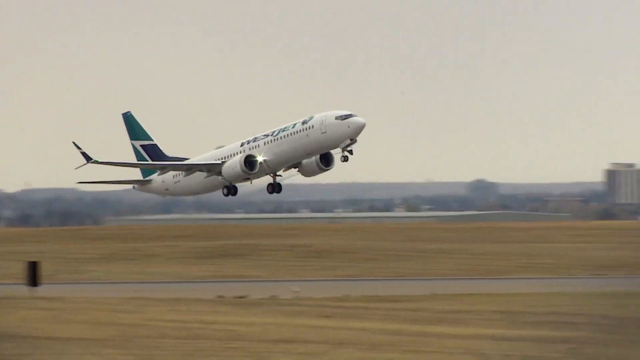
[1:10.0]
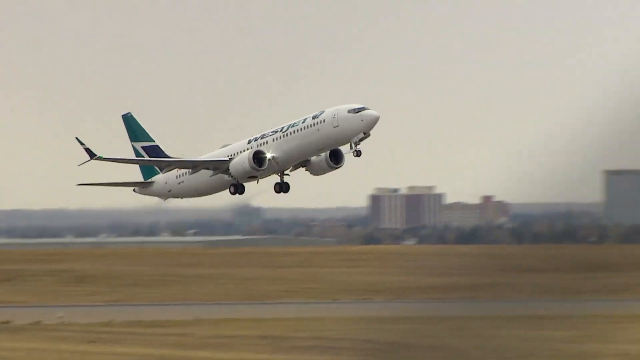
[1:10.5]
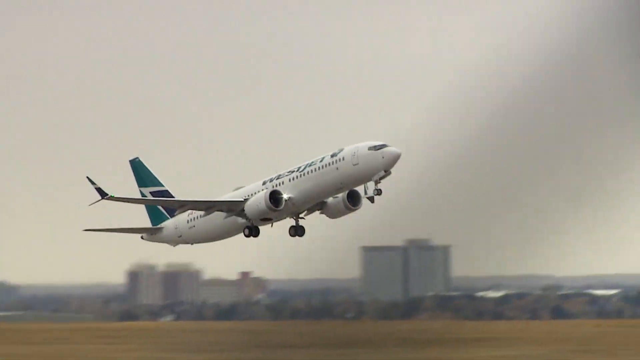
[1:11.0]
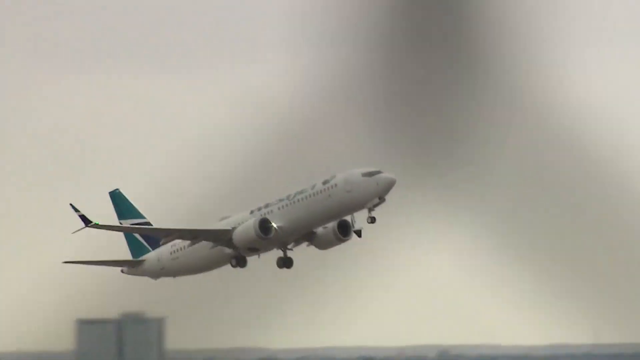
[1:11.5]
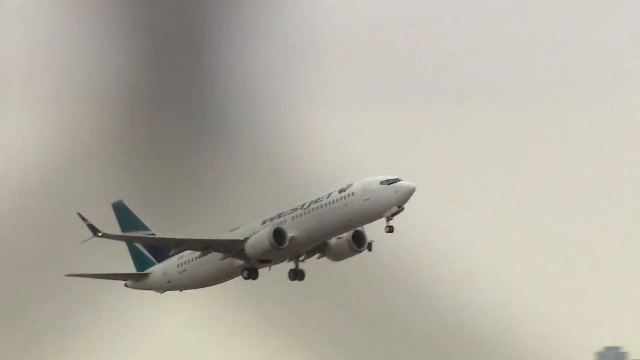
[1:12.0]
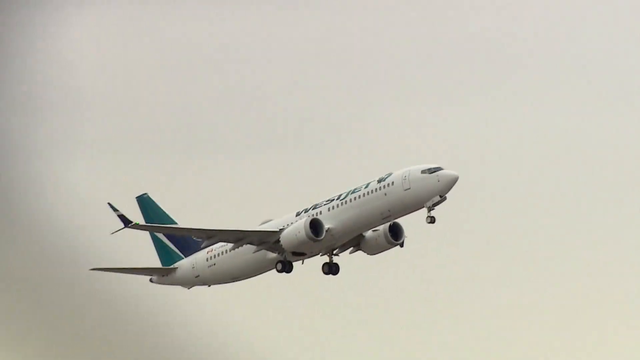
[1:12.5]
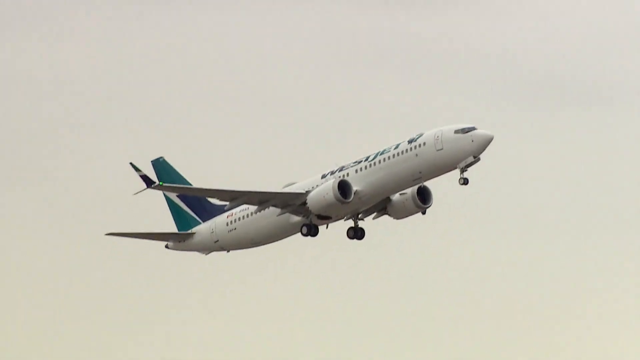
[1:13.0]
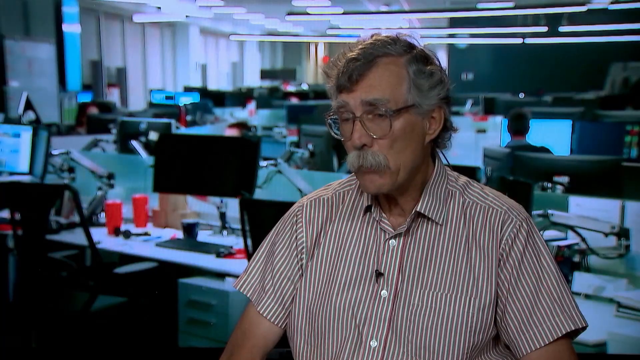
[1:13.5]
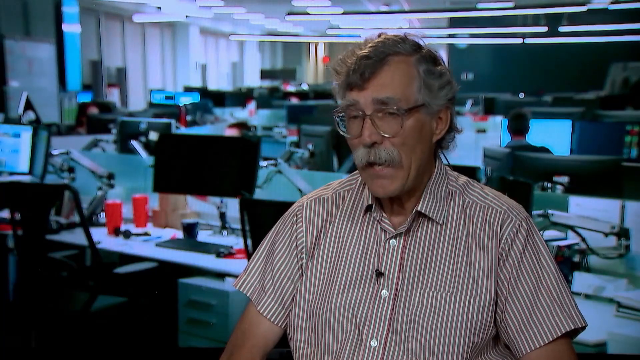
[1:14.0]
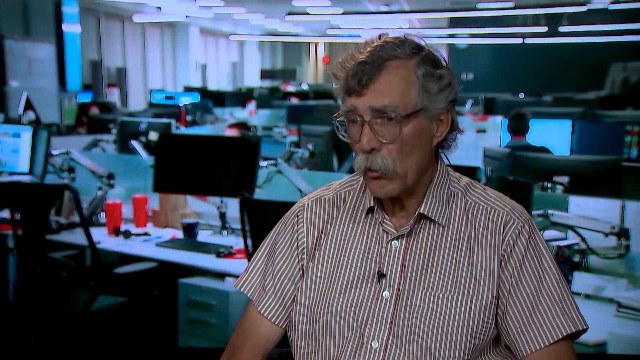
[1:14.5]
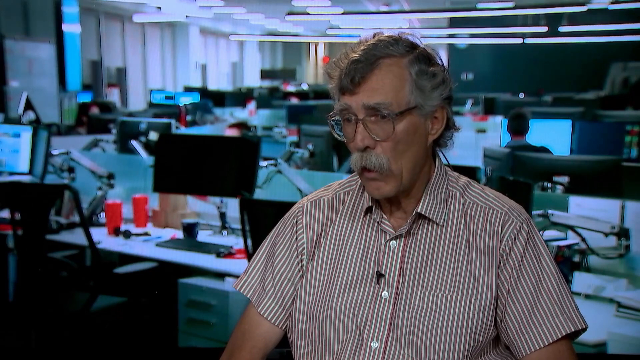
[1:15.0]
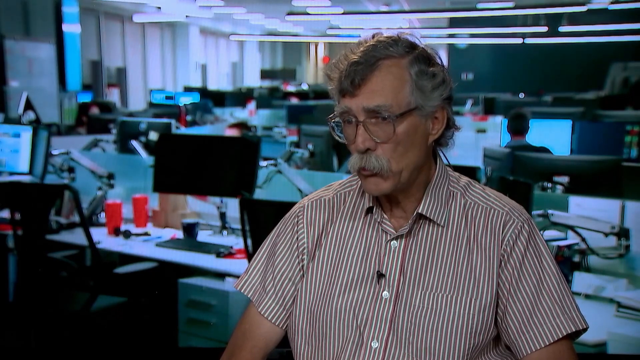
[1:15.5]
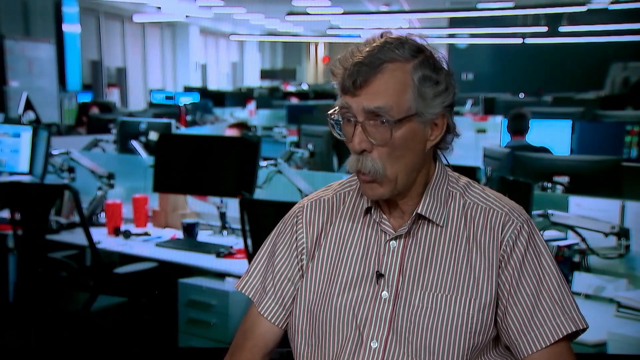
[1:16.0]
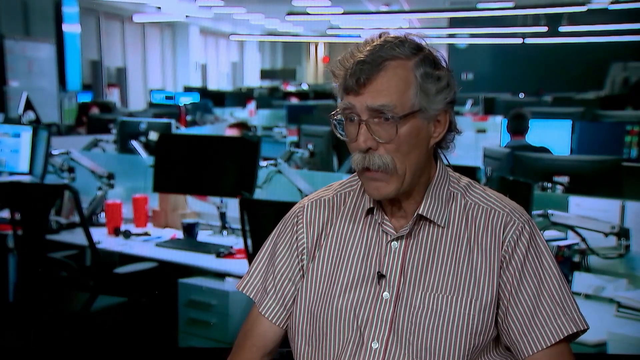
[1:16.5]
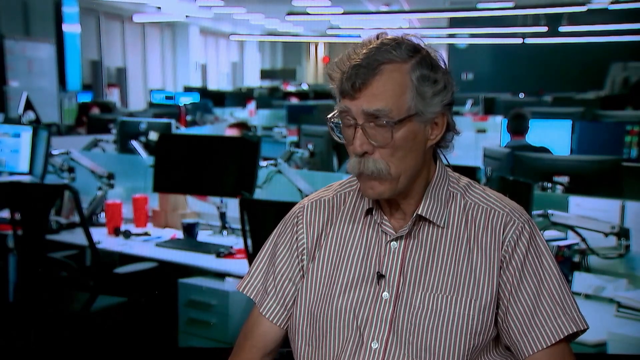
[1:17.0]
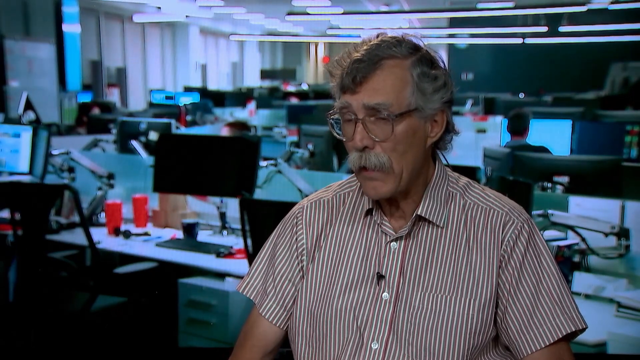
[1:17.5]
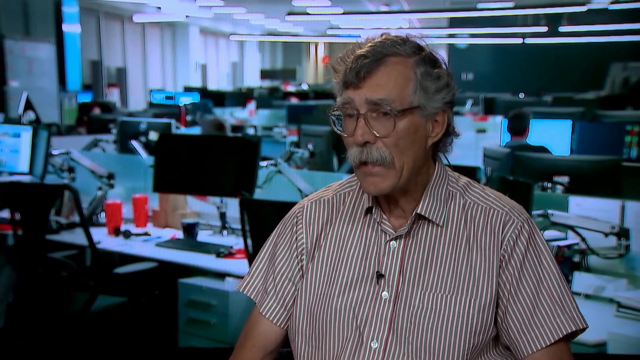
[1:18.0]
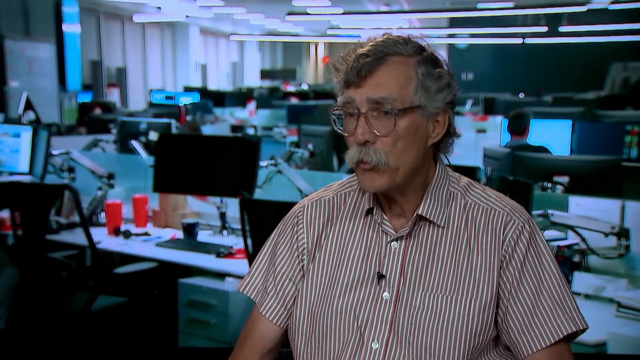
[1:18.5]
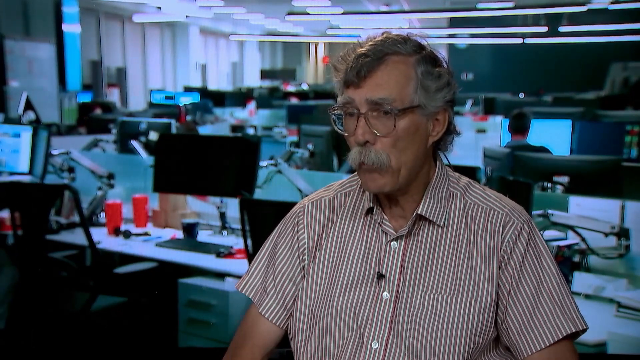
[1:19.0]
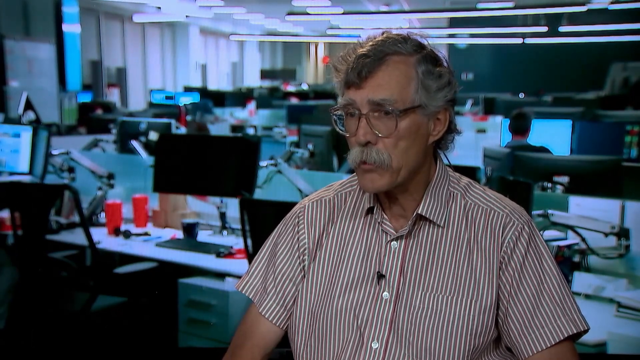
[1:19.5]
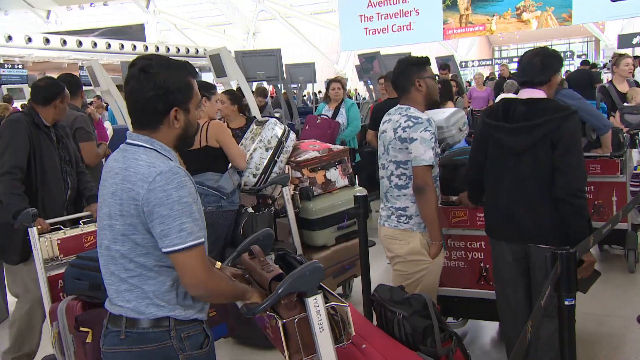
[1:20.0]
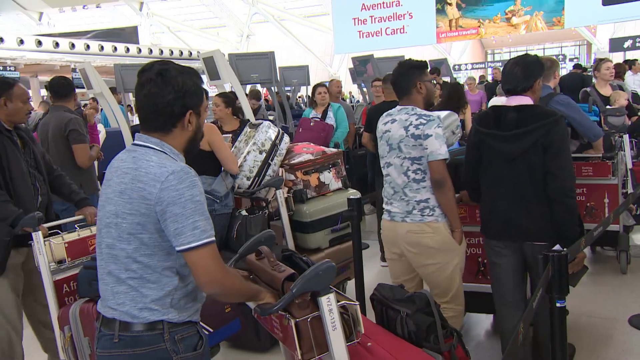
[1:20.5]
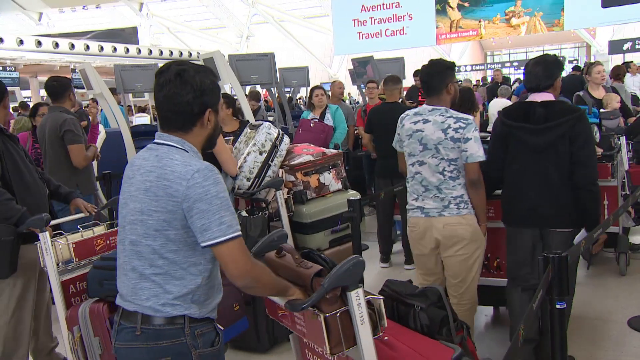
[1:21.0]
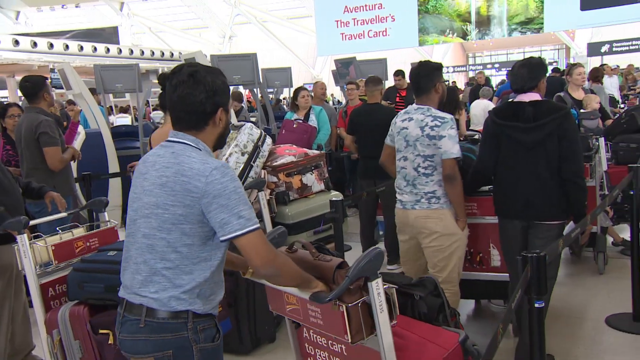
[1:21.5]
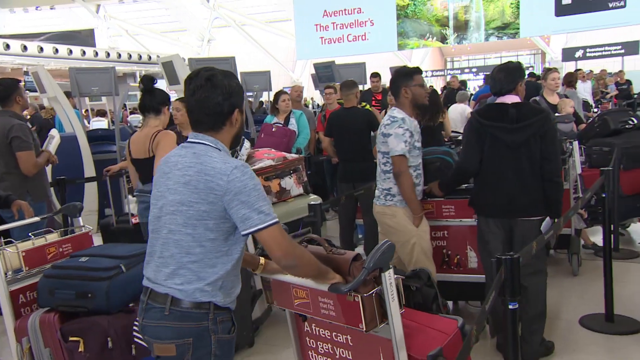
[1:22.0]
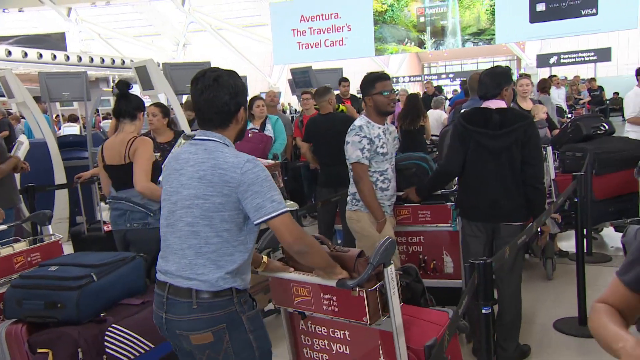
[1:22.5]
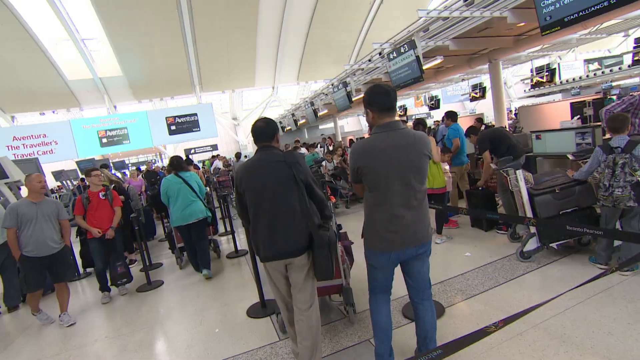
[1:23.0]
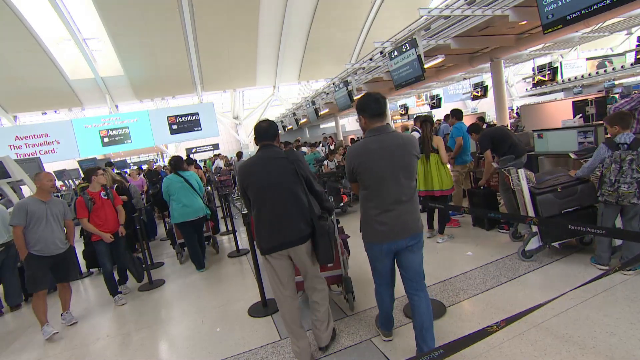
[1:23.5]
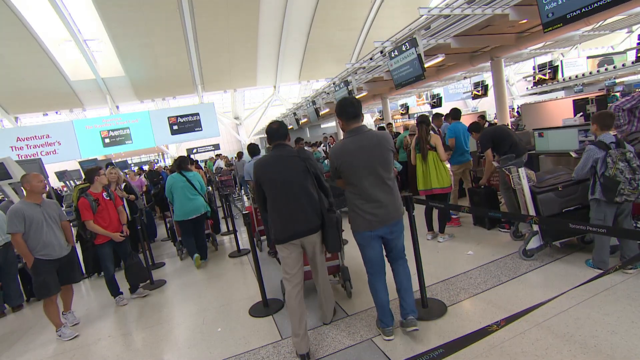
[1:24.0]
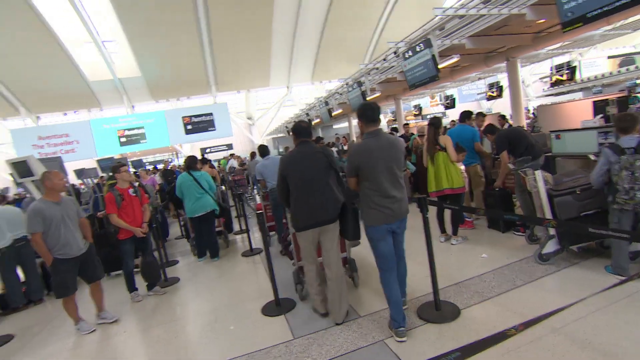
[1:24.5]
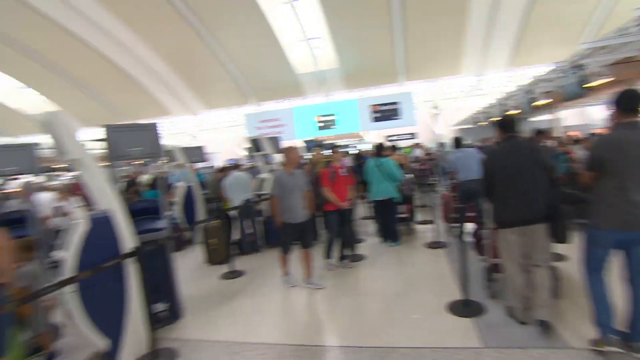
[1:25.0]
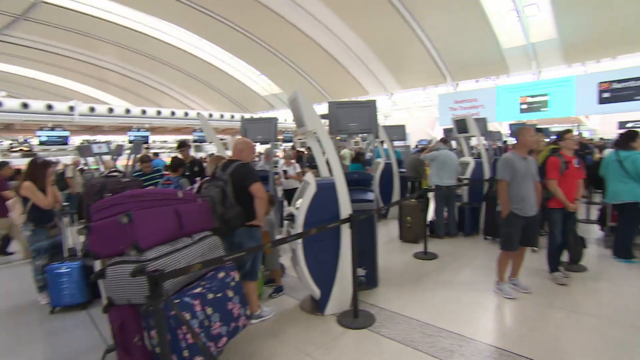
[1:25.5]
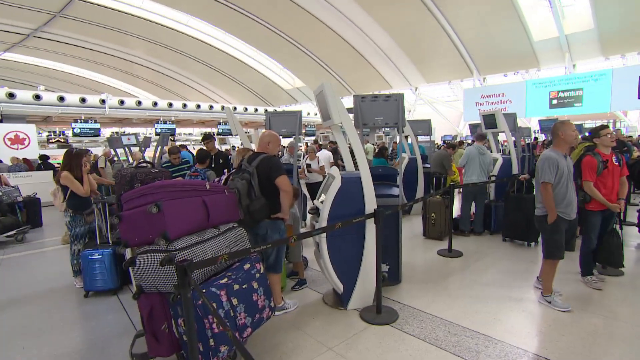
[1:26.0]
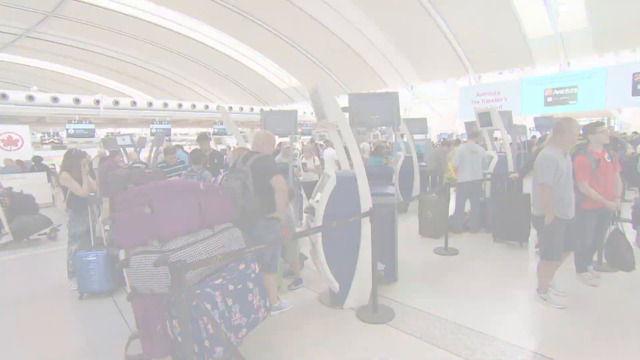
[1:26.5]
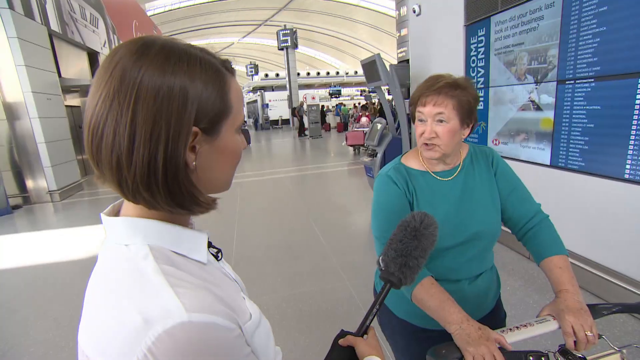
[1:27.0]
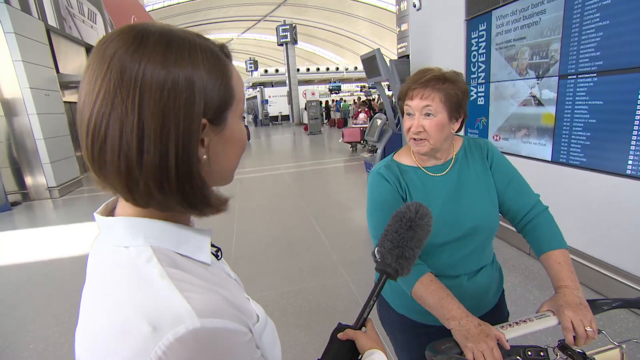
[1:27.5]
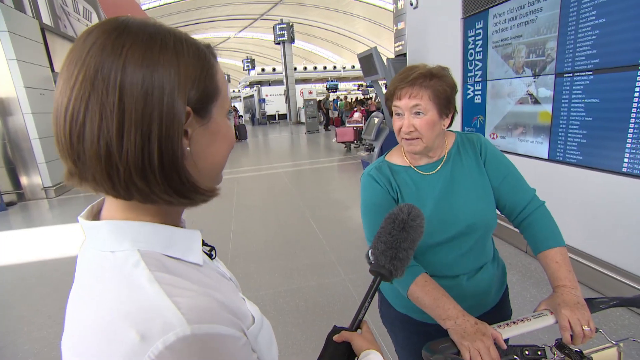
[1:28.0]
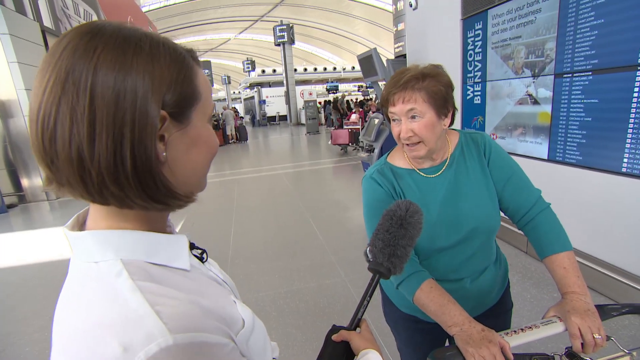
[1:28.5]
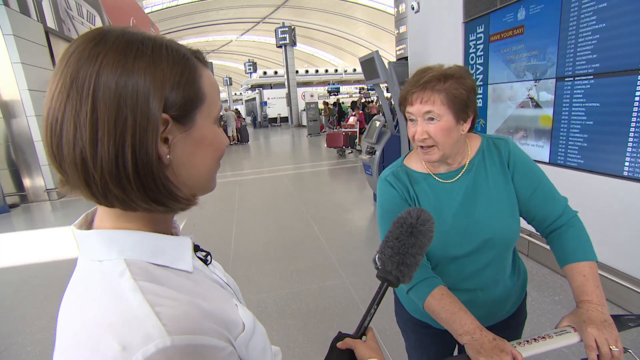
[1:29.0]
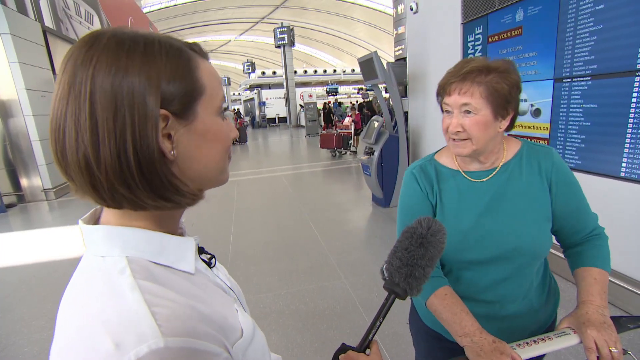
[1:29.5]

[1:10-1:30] An airplane with a green tail fin, labeled "WestJet" on the side, takes off from an airstrip with its wheels lowered. The video then cuts to an office with multiple computers and workstations, where an older man with a mustache gives an interview in the foreground. A black lapel microphone is attached to his short-sleeved brown and white button-up shirt. He talks toward the camera, moving his head around to emphasize various points. Next, many people are lined up in a very busy, crowded airport, many of them with carts full of luggage. A different angle shows the same line of people waiting with their luggage carts. Then a young woman holds a fuzzy microphone to an older woman's face, interviewing her in the airport.